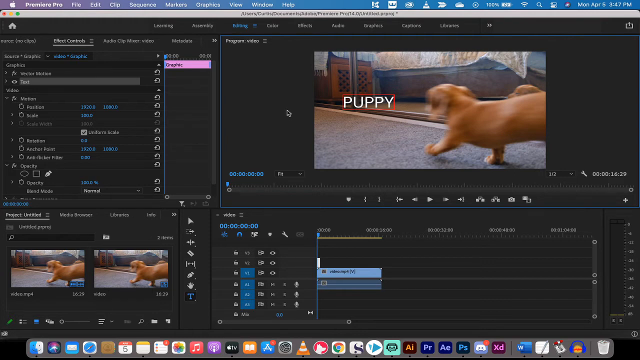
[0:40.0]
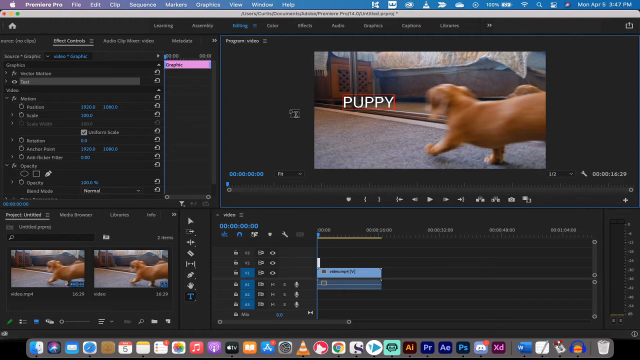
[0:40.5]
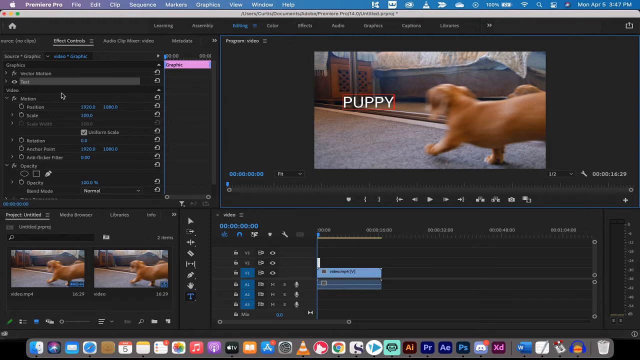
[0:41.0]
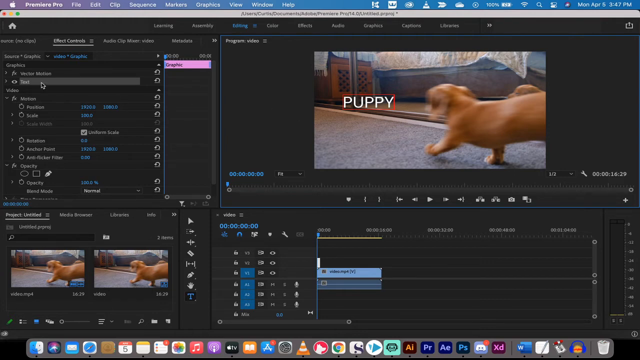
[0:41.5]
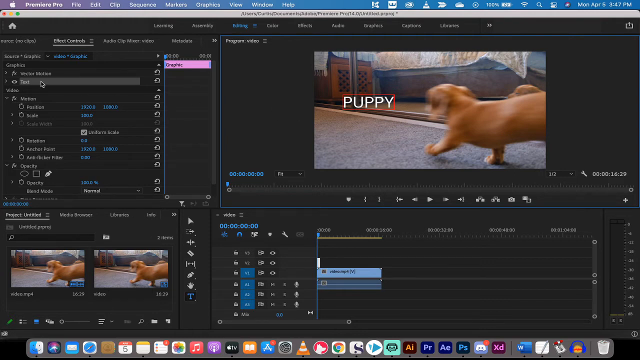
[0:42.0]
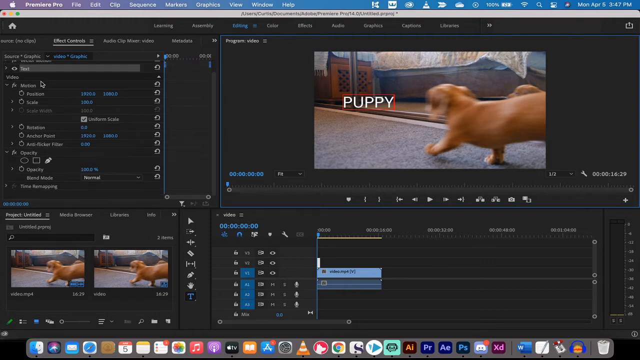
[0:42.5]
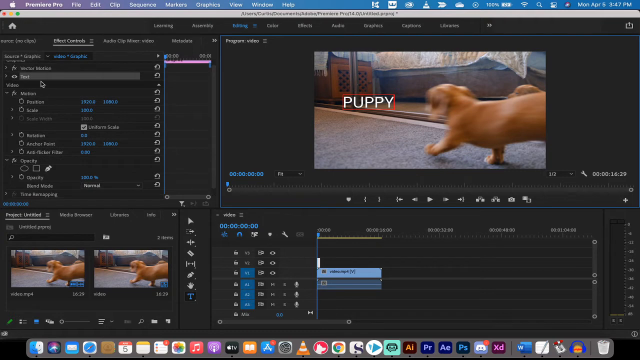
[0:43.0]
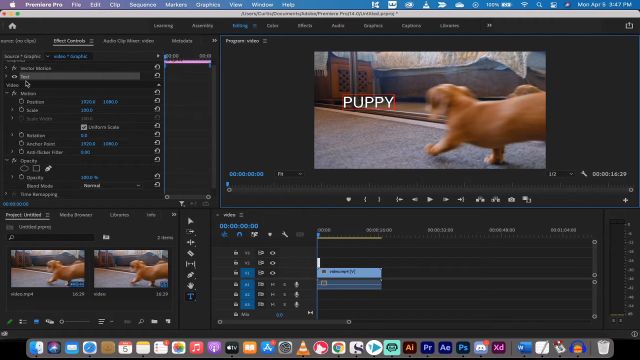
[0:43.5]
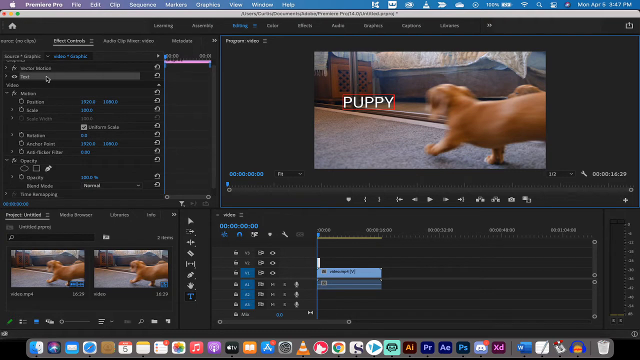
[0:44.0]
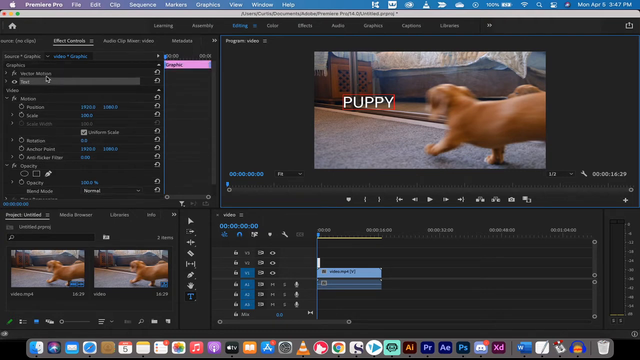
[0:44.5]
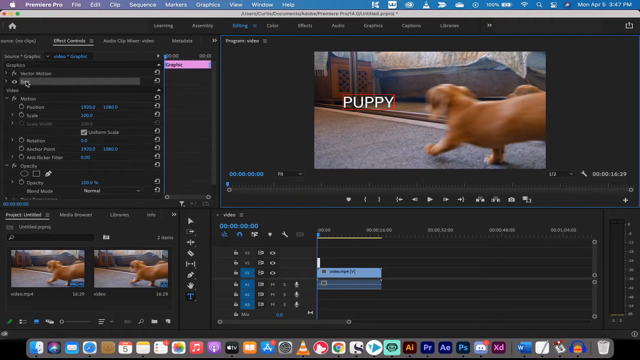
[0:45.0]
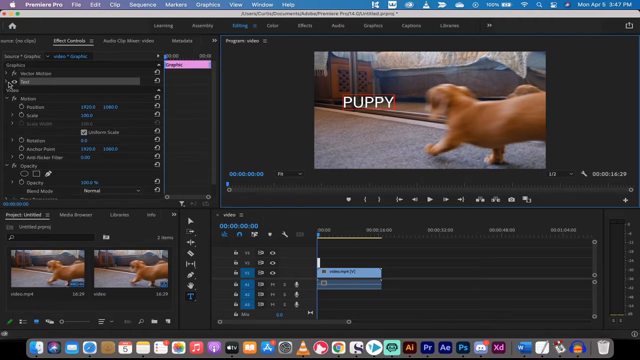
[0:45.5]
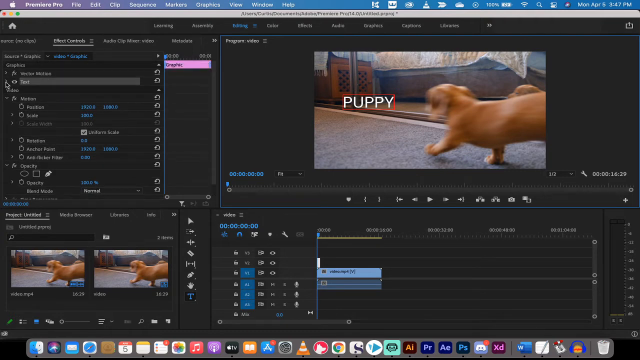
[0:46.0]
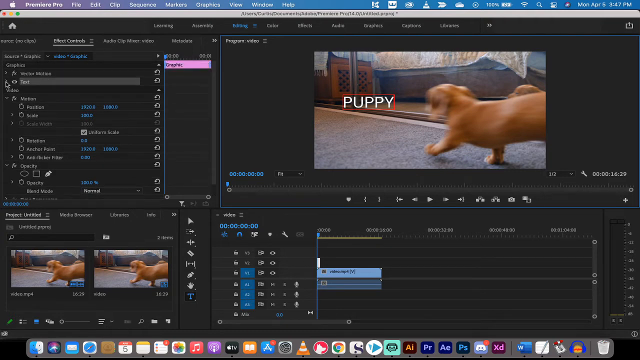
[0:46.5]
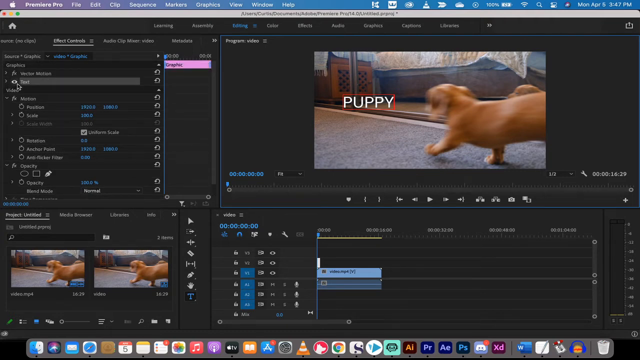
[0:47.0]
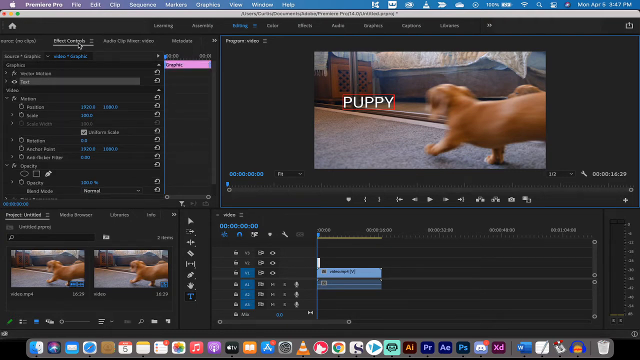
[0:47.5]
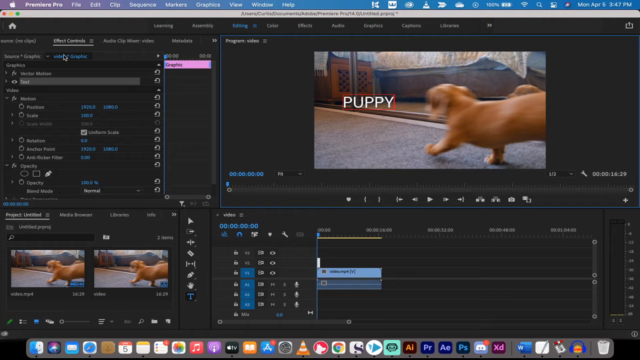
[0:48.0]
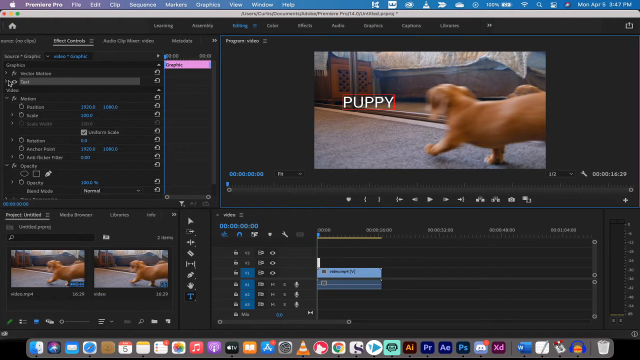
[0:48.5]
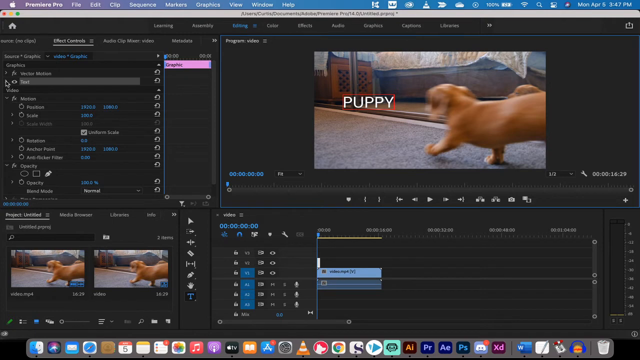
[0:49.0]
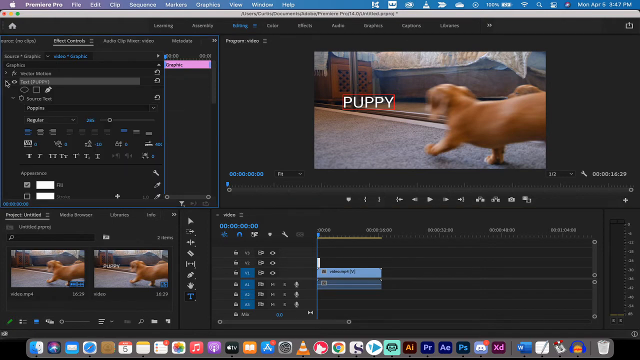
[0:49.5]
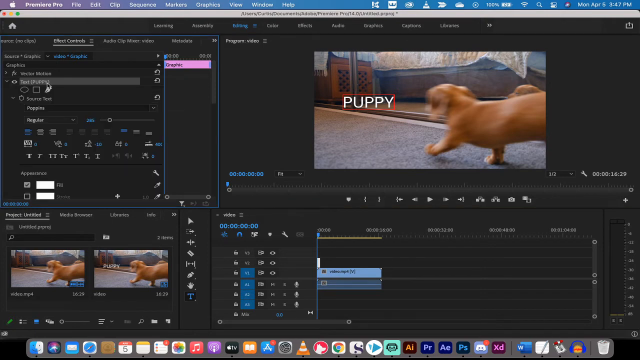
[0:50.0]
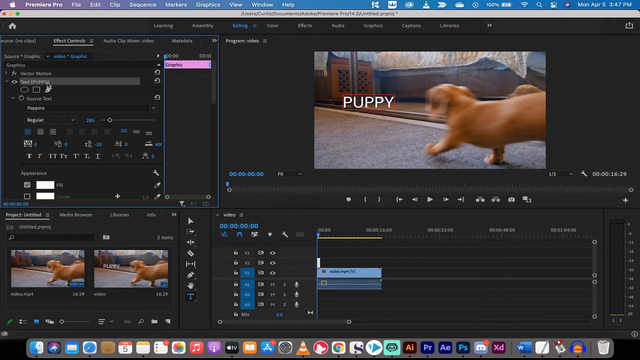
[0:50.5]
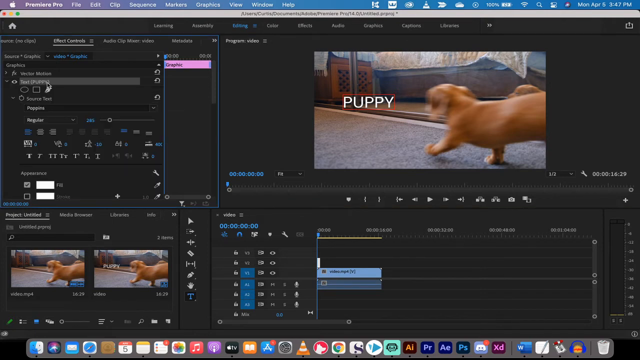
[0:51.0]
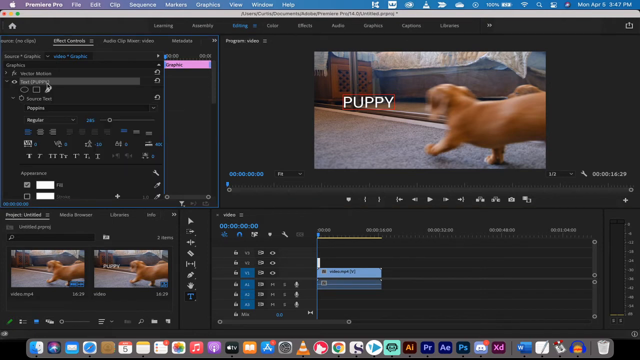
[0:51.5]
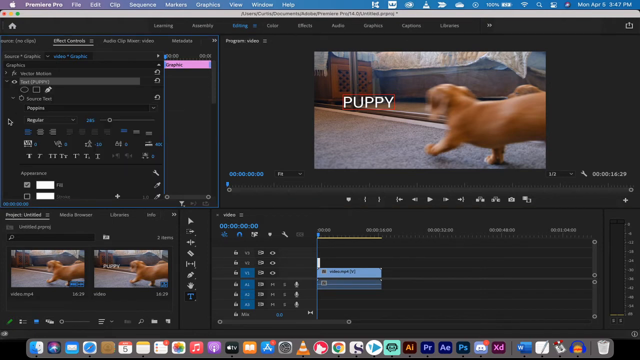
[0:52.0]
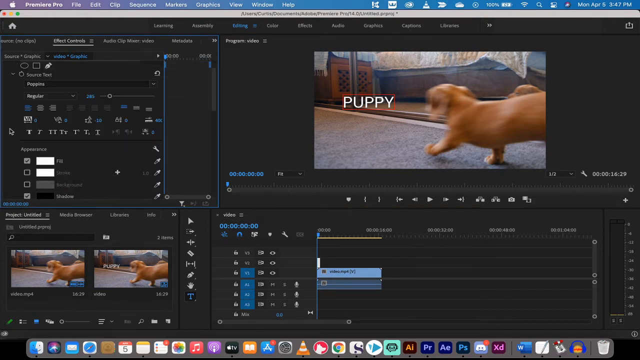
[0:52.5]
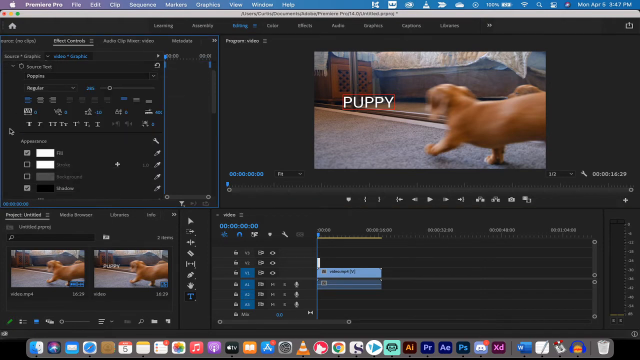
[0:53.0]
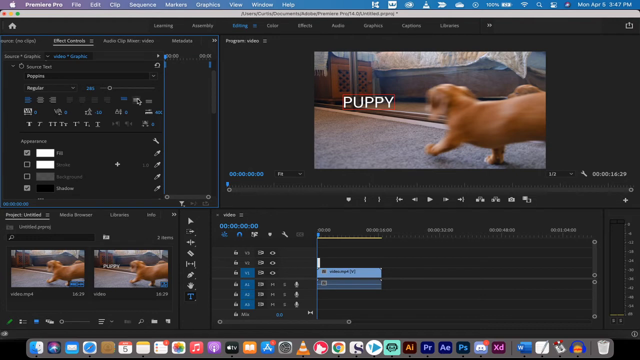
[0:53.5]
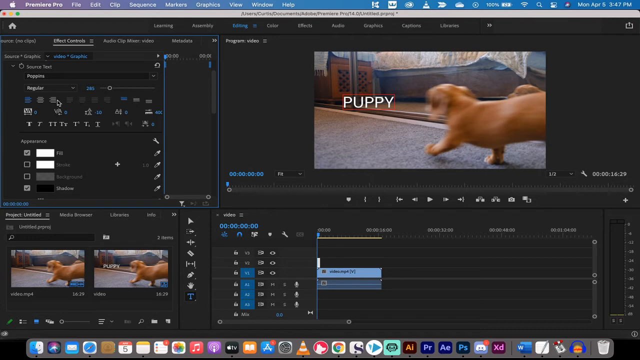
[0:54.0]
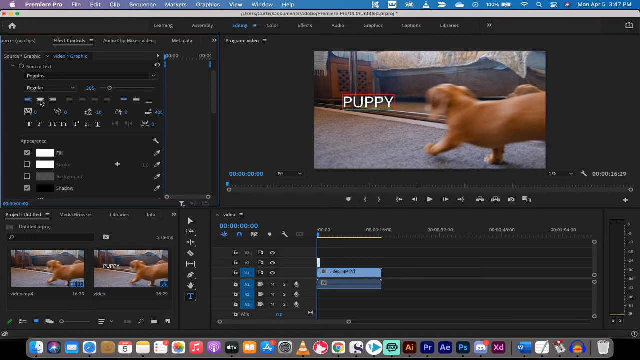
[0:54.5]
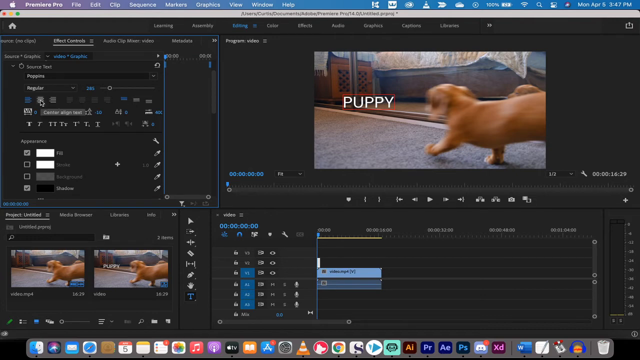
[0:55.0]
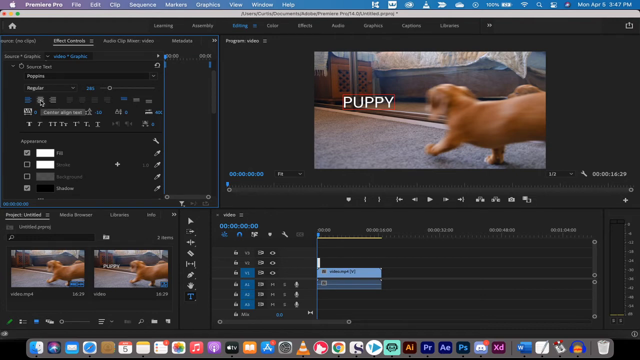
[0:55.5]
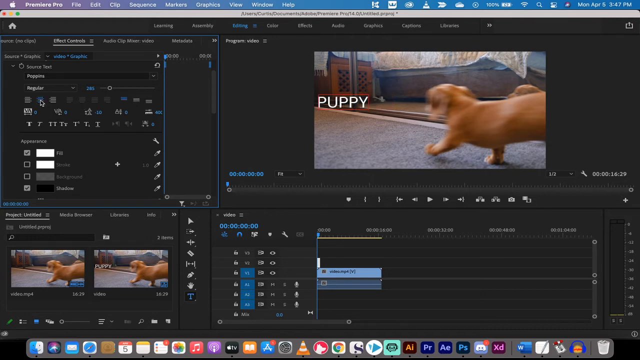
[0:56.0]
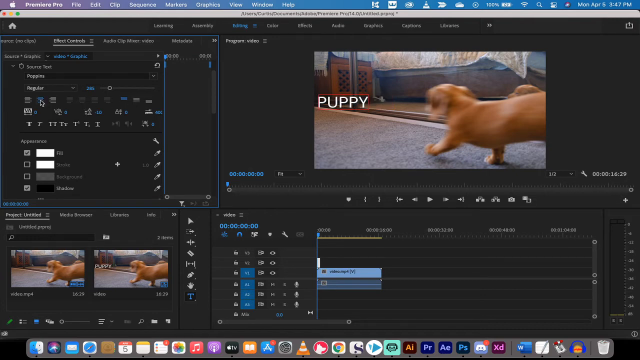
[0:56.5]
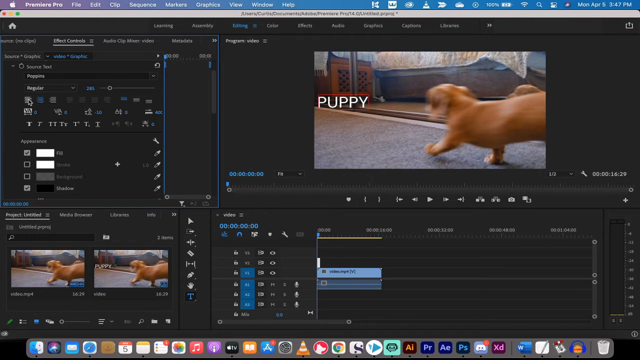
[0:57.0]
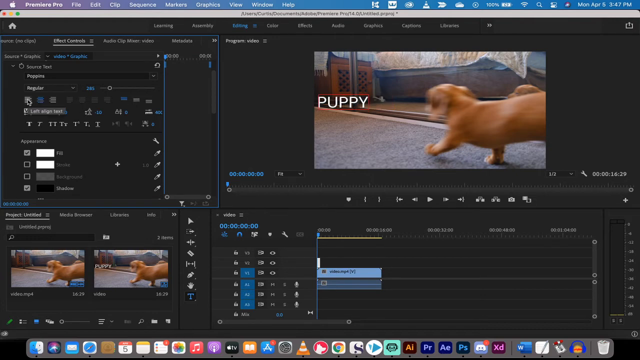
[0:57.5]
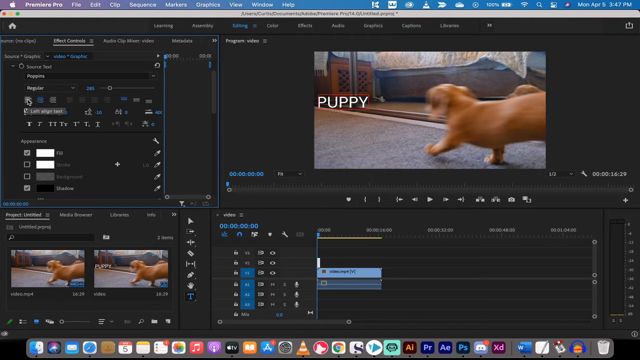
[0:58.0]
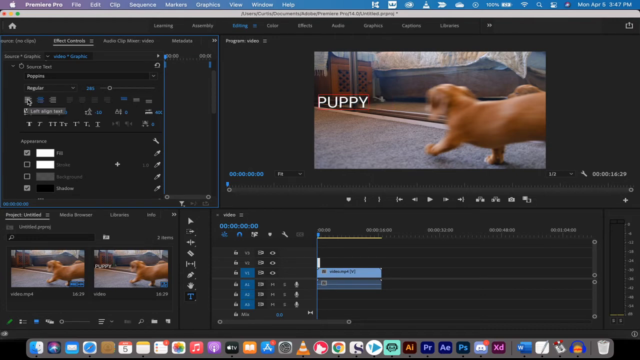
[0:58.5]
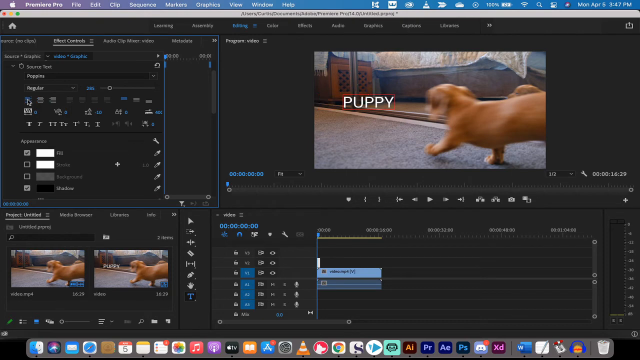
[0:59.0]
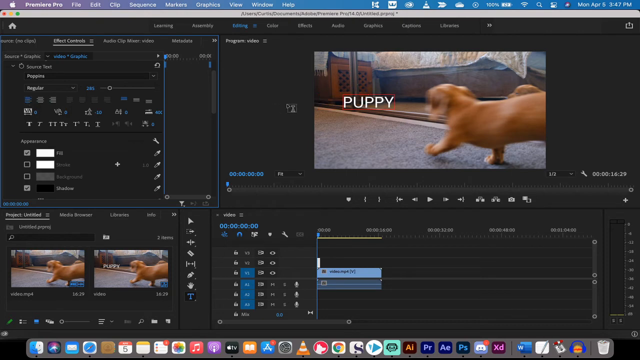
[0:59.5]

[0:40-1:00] Premiere Pro is still open, and text has now been added to the video preview section in the top right corner of the application. The preview shows a low-level scene of a puppy with another puppy behind him, running on a carpet area in a home, with a couch in the background and a brown piece of furniture that appears to be some sort of book stand or shelf. A red box for typing text contains the word "puppy" in white letters. The cursor moves from the program video box over to the left and scrolls down through the effects and options for adding effects to the video and to the added text.